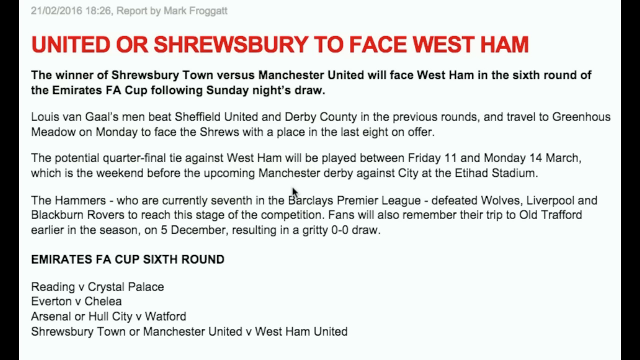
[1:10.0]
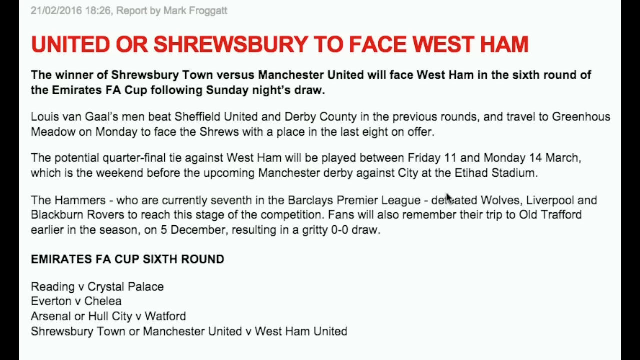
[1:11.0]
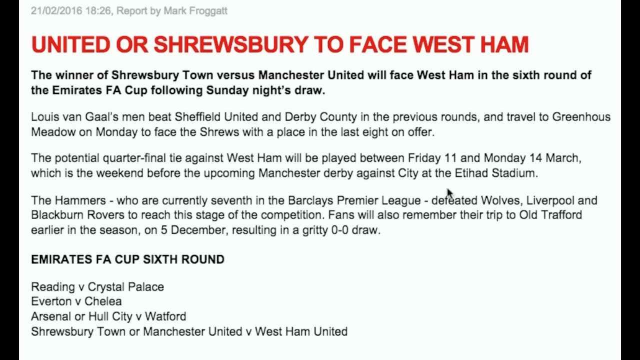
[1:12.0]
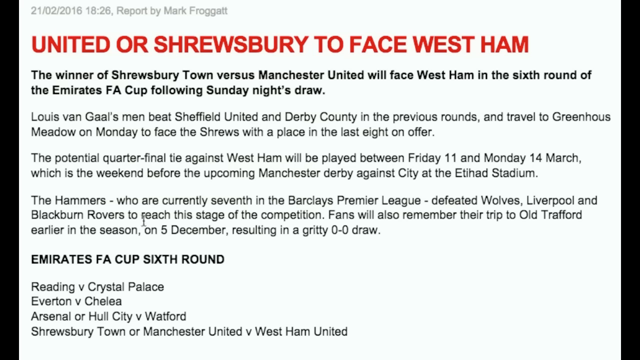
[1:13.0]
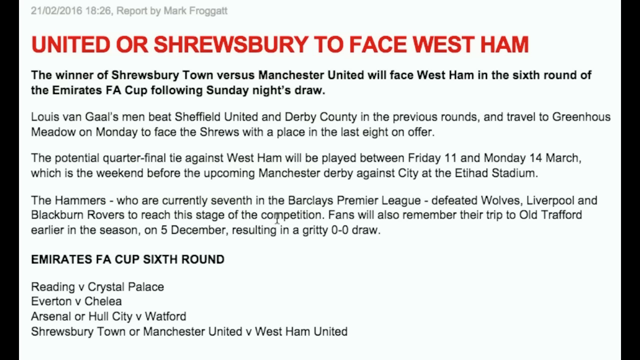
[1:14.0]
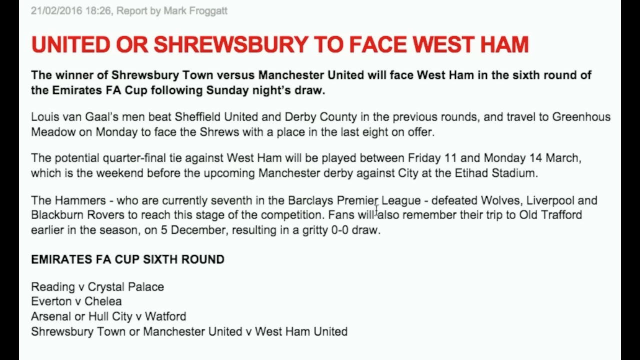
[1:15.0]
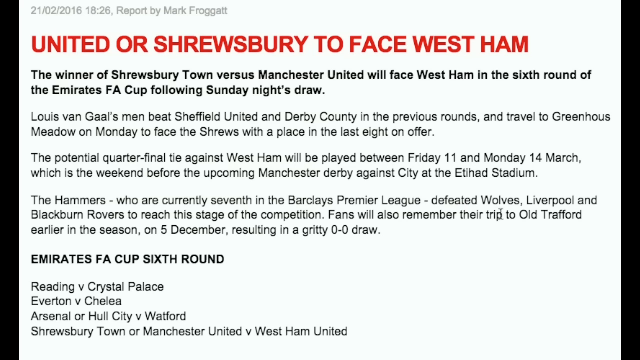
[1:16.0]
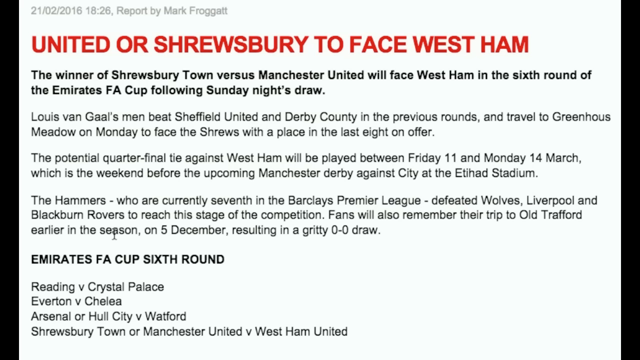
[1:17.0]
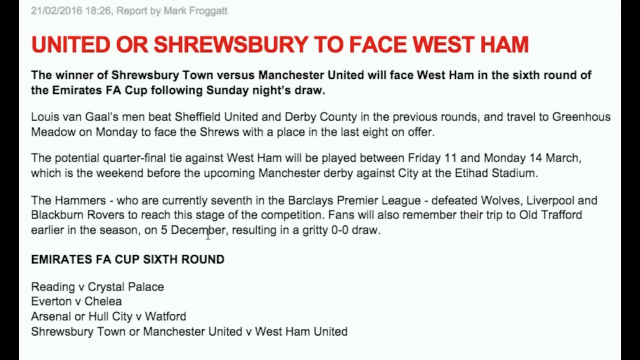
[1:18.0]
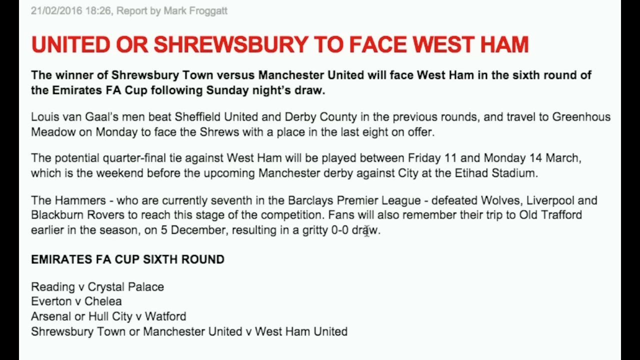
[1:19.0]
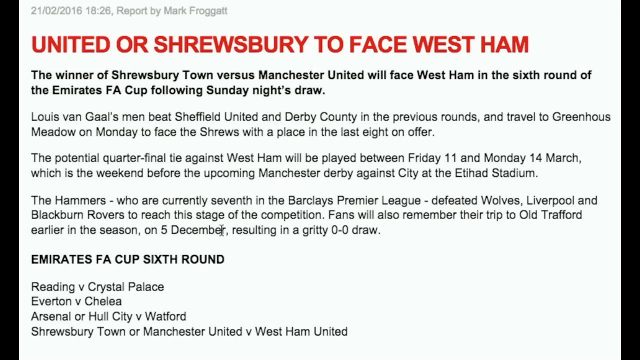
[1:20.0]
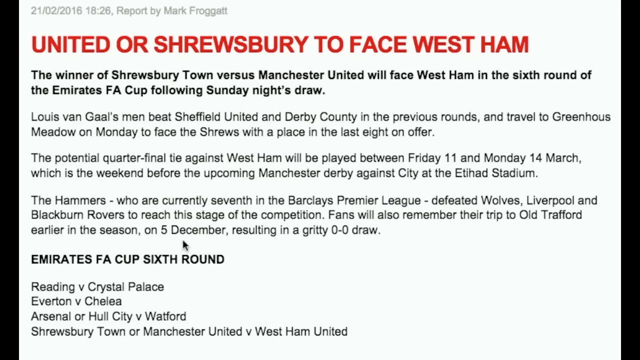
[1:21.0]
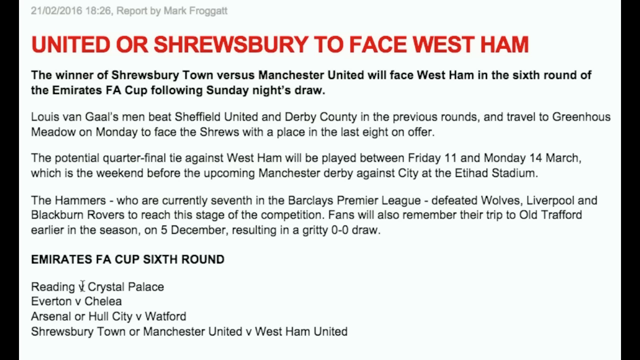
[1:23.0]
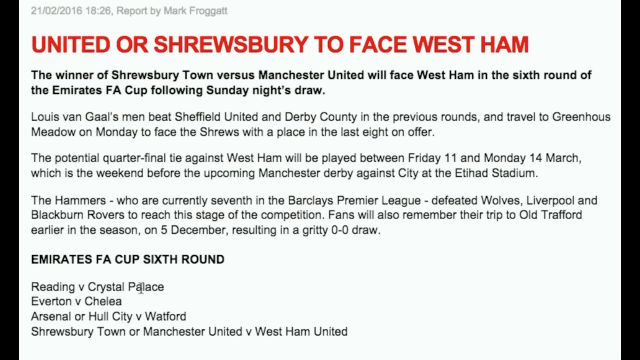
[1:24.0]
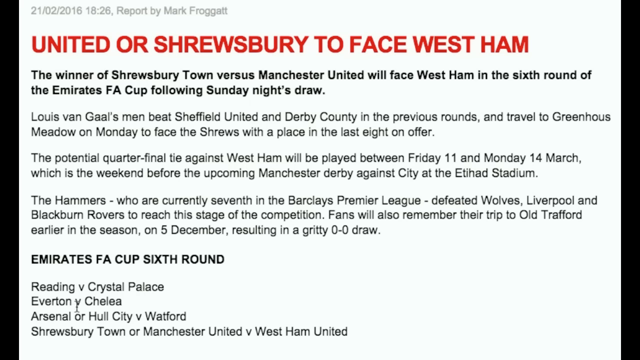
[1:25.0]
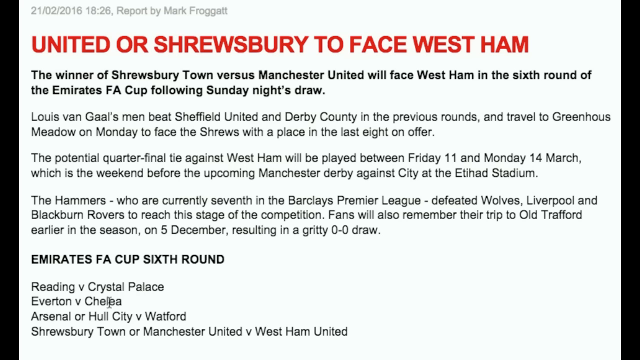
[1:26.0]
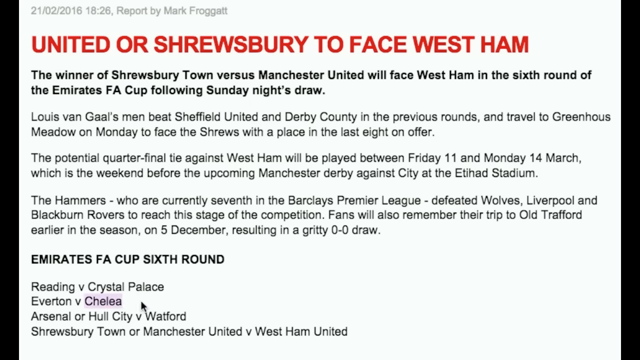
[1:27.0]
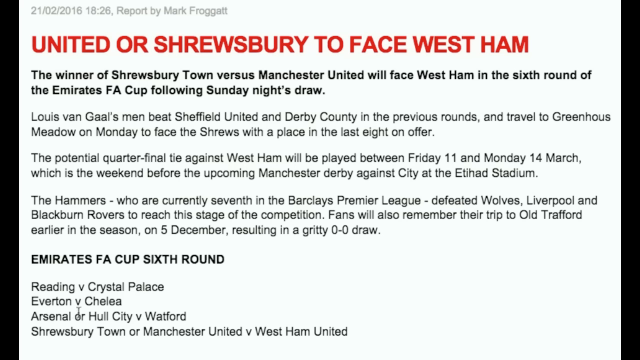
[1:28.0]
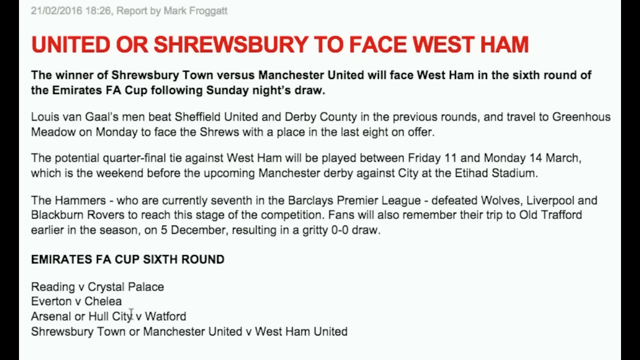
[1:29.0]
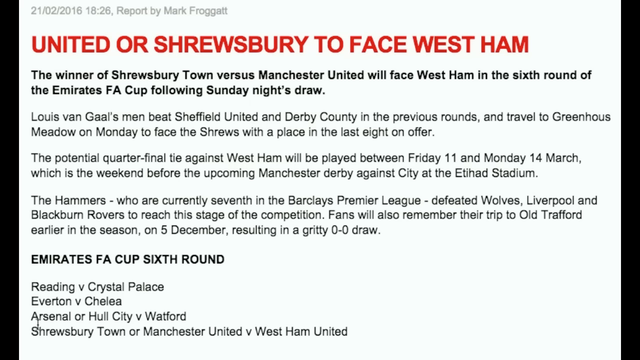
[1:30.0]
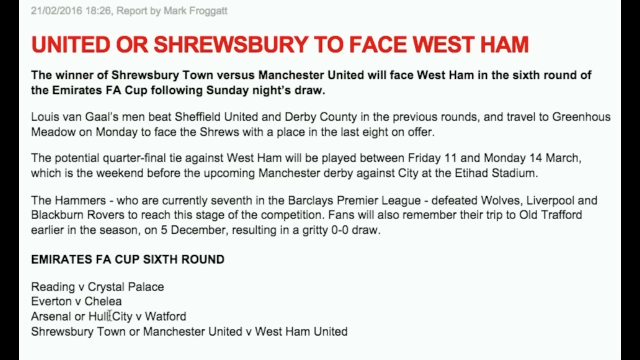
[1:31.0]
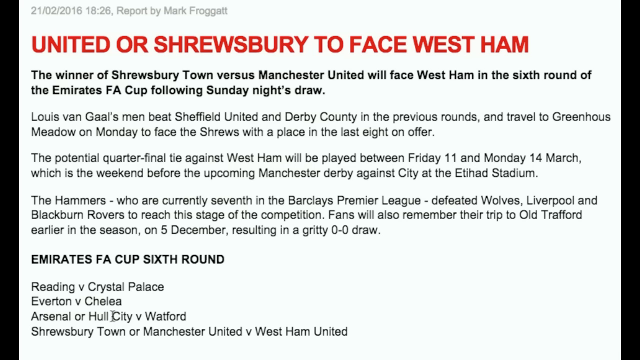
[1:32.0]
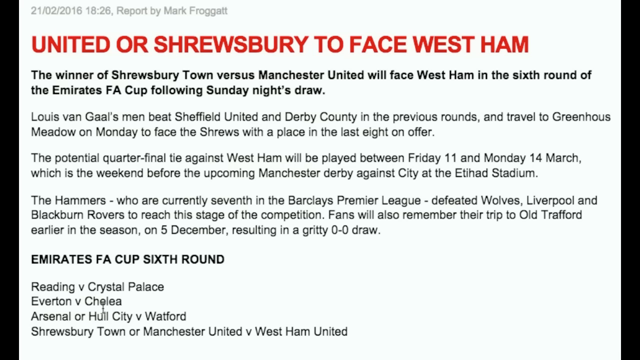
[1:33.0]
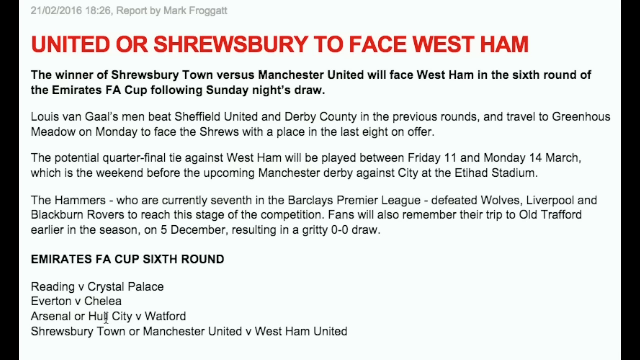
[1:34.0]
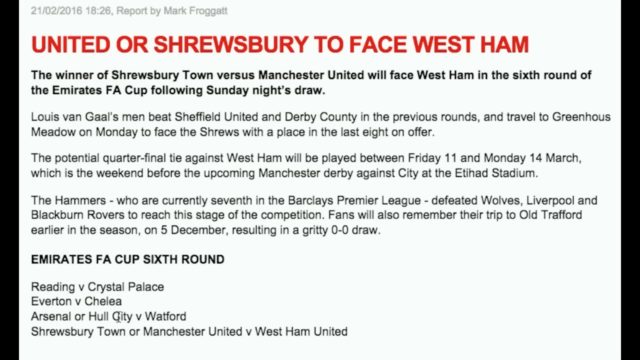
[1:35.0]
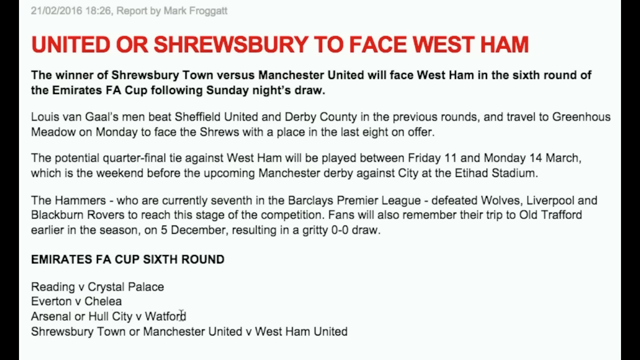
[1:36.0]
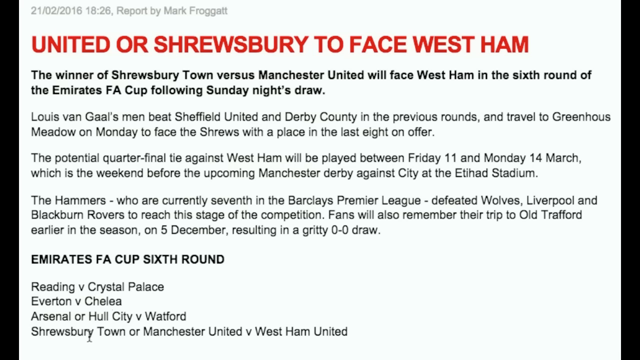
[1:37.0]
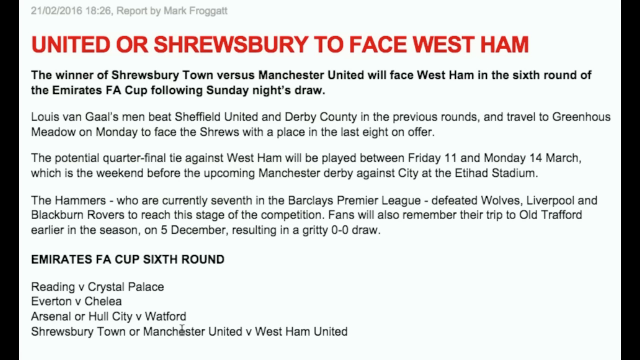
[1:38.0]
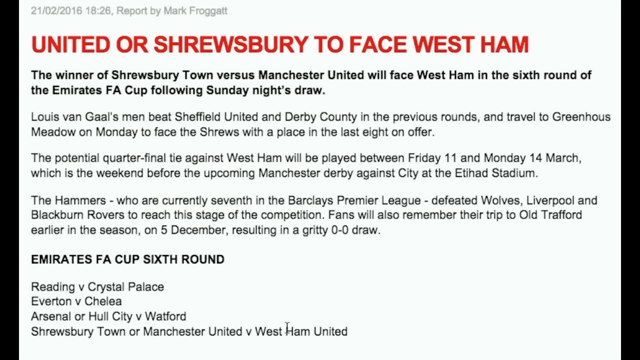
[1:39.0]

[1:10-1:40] The same text is still shown: "United or Shrewsbury to face West Ham" and then the bold text "the winner of Shrewsbury Town versus Manchester United will face West Ham in the sixth round of the Emirates FA Cup following Sunday night's draw." Below are three short, separated blurbs, some only a sentence long. The first reads "Louis van Gaal's men beat Sheffield United and Derby County in the previous rounds and traveled to Greenhous Meadow on Monday to face the Shrews with a place in the last eight on offer." A cursor moves along the words being read, as if this is a video of someone's screen. The cursor then moves to the bottom section, which reads "Emirates FA Cup sixth round", then "Reading v Crystal Palace", then "Everton v. Chelea", then "Arsenal or Hull City v. Watford".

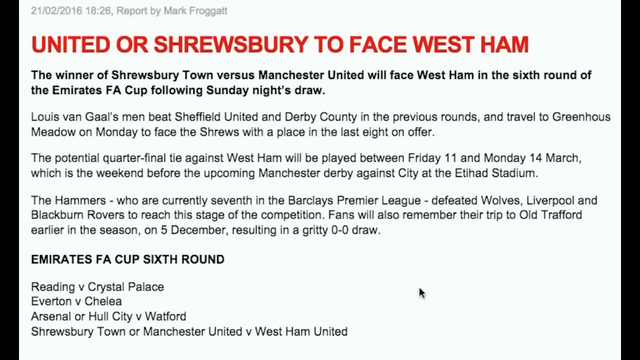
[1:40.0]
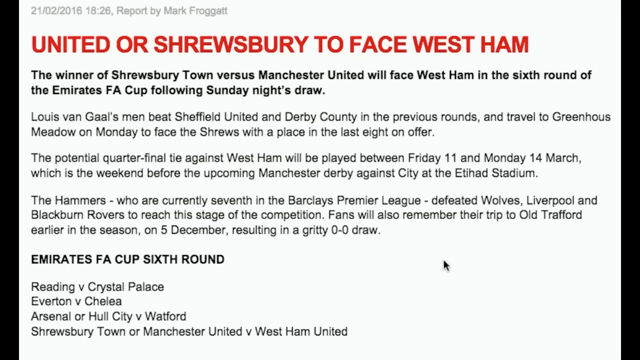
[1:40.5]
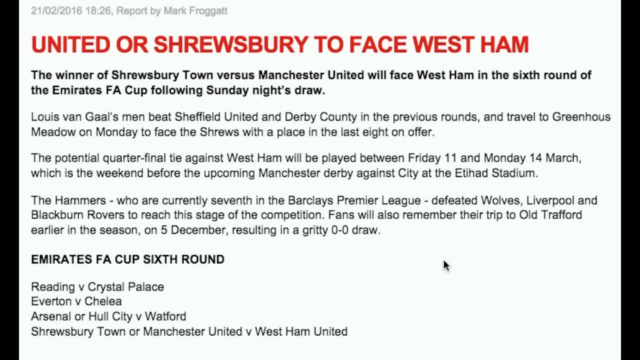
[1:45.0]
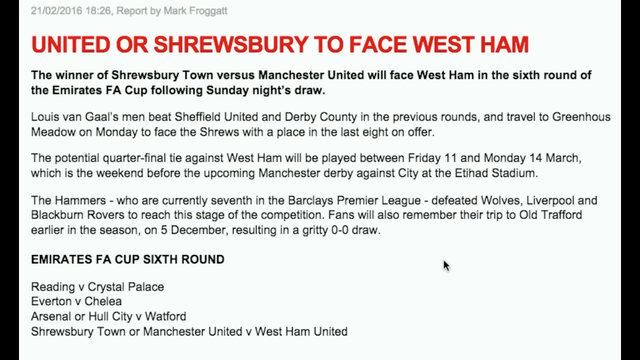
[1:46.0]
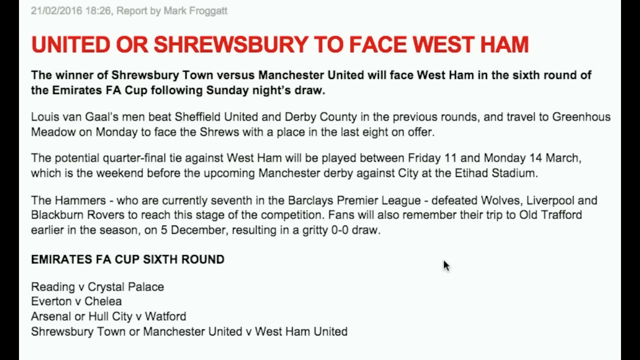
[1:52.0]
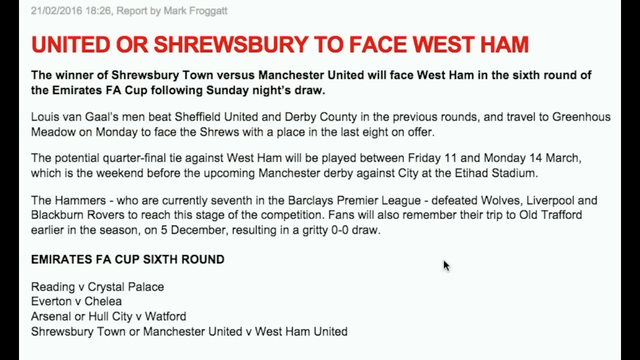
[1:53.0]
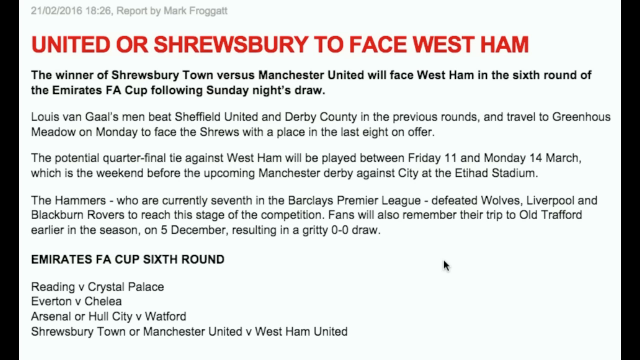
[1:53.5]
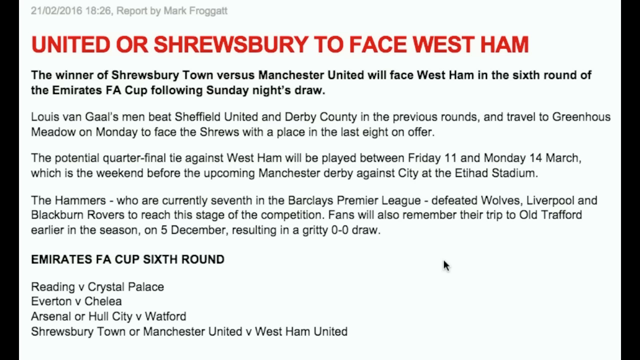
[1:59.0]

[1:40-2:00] The text is still shown. A cursor hovers in roughly the lower right of the screen, not moving, pointing up toward the third blurb under the main headline. That blurb reads "the Hammers - who are currently seventh in the Barclays Premium League - defeated Wolves, Liverpool and Blackburn Rovers to reach this stage of the competition." Then it reads "fans will also remember their trip to Old Trafford earlier in the season on 5 December, resulting in a gritty 0-0 draw." Underneath, in capital letters, is "EMIRATES FA CUP SIXTH ROUND", and below that "Reading V. Crystal Palace, Everton V. Chelea, Arsenal or Hull City, v Watford, Shrewsbury Town or Manchester United v West Ham United". The cursor stays still and looks like a little black arrow.